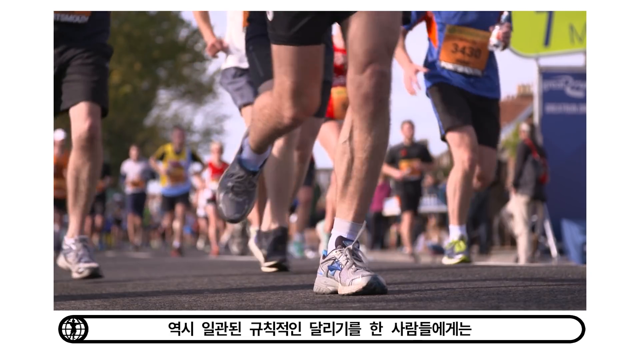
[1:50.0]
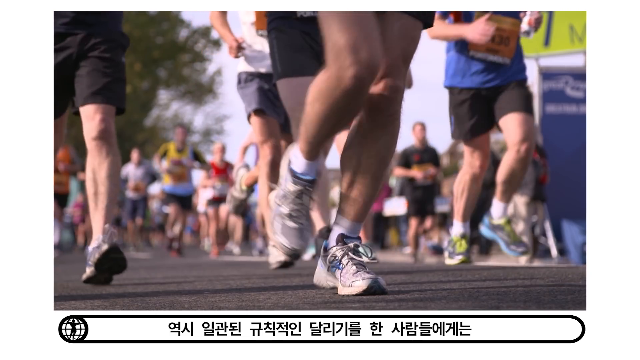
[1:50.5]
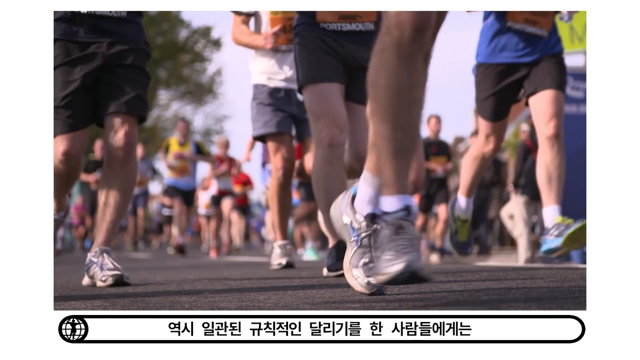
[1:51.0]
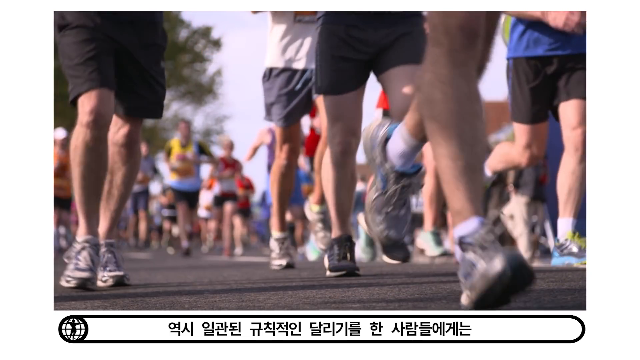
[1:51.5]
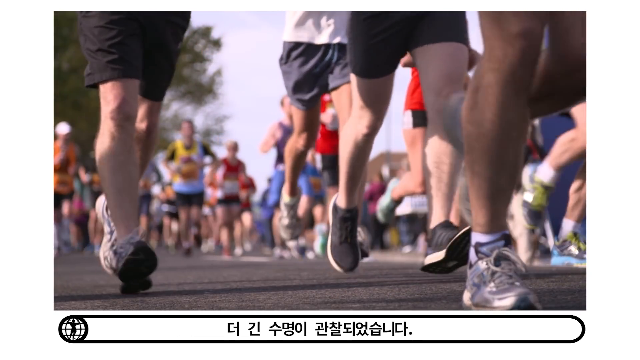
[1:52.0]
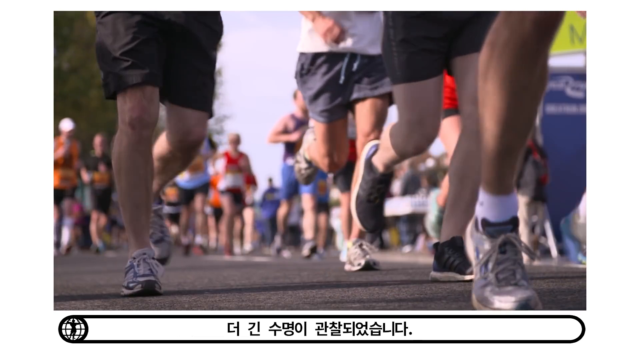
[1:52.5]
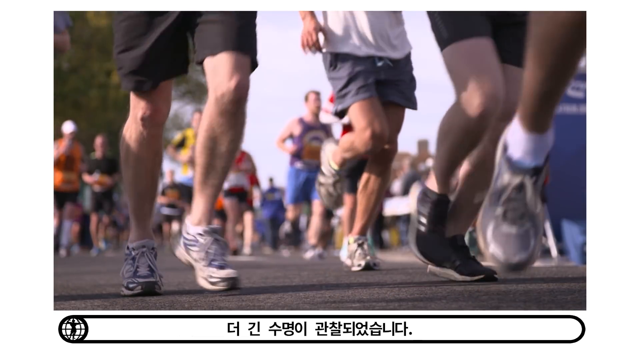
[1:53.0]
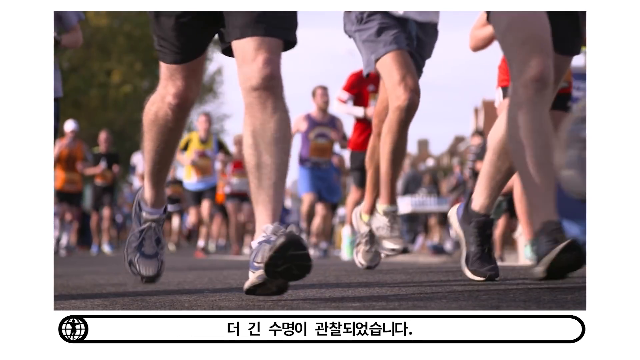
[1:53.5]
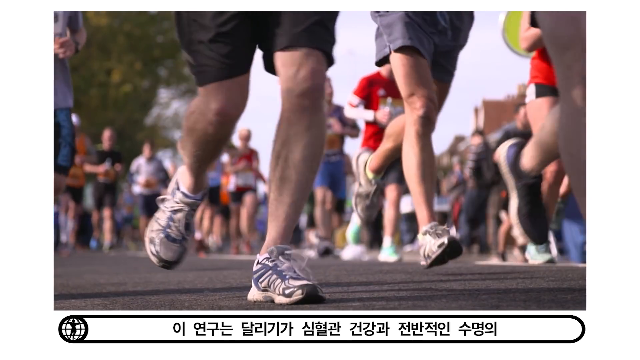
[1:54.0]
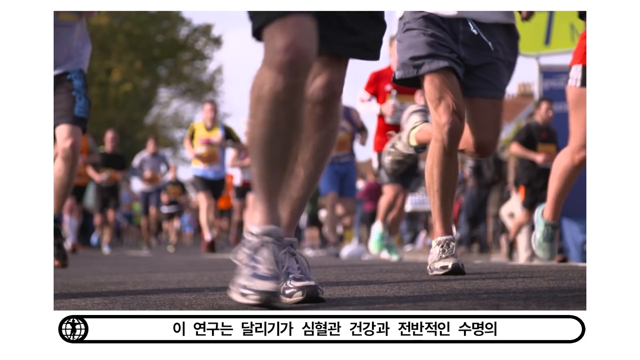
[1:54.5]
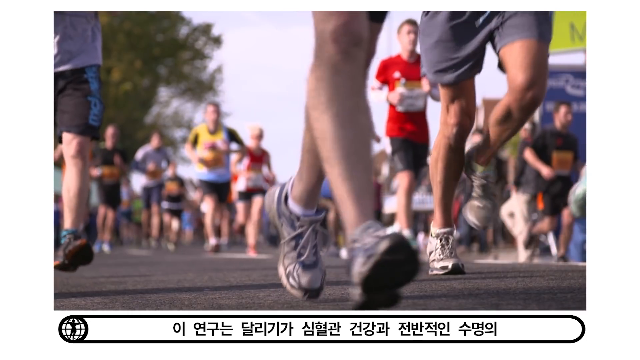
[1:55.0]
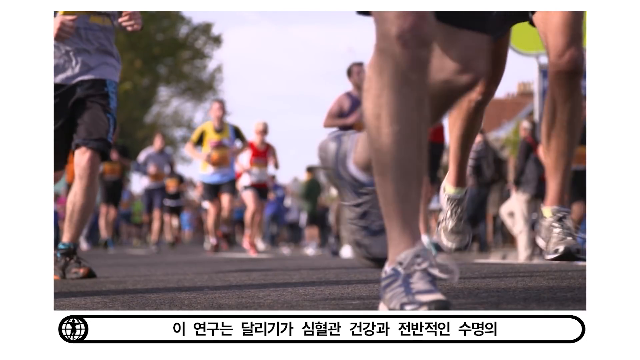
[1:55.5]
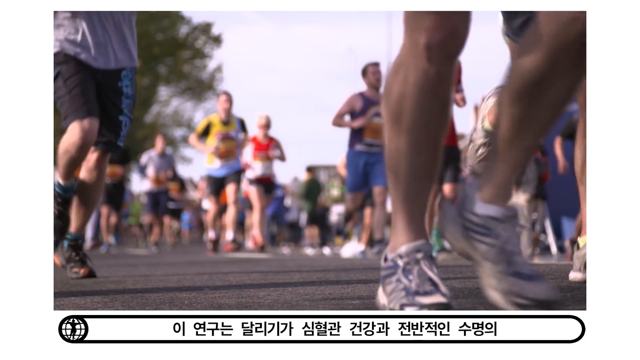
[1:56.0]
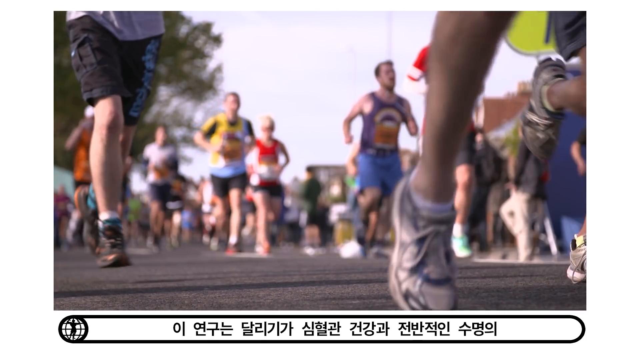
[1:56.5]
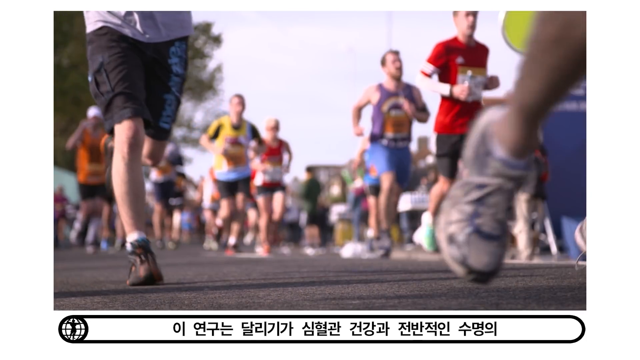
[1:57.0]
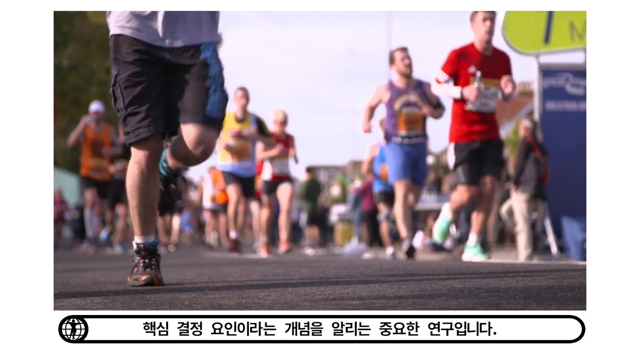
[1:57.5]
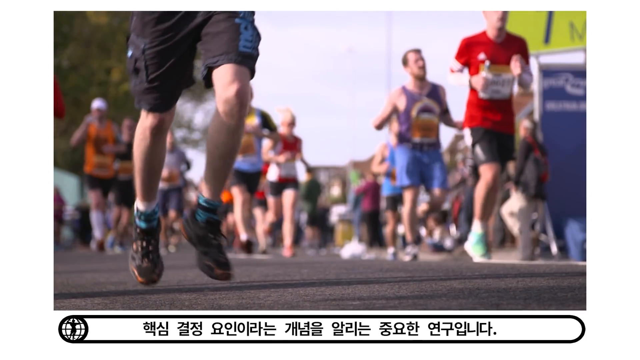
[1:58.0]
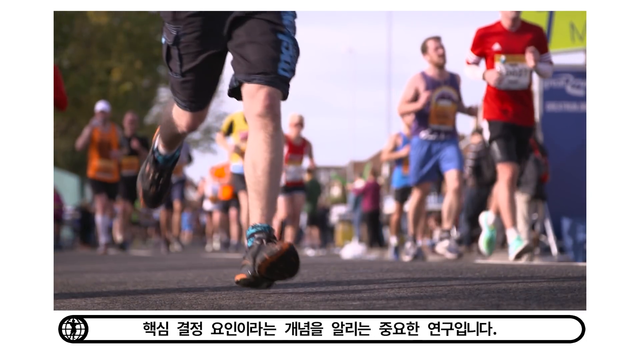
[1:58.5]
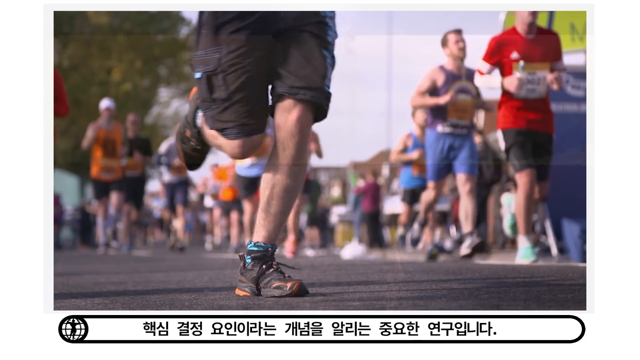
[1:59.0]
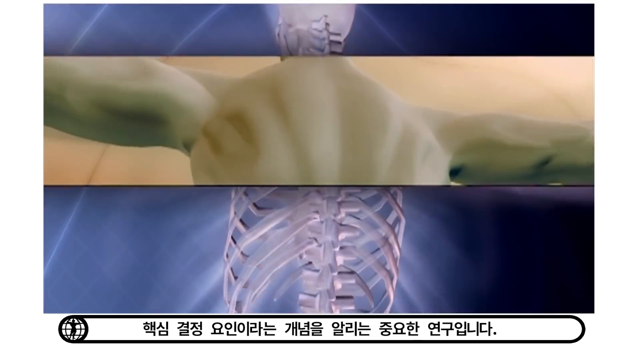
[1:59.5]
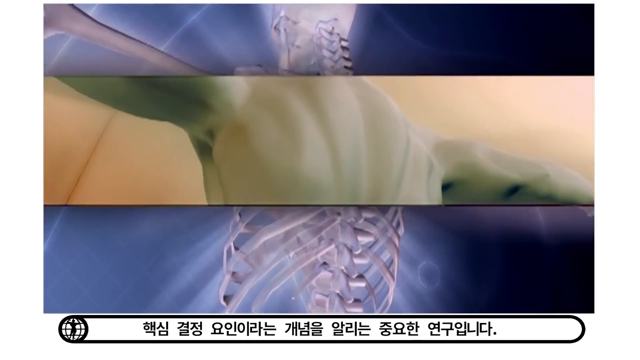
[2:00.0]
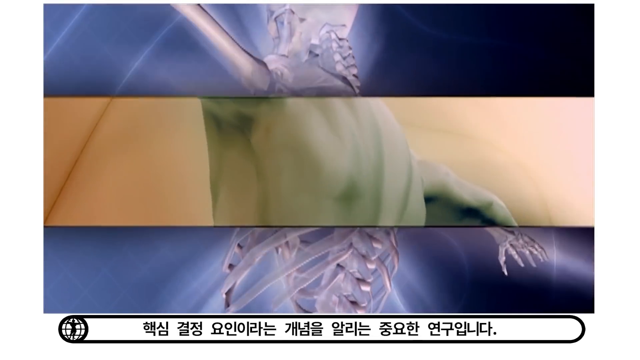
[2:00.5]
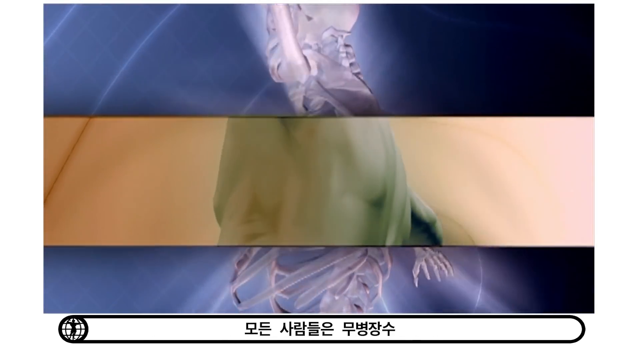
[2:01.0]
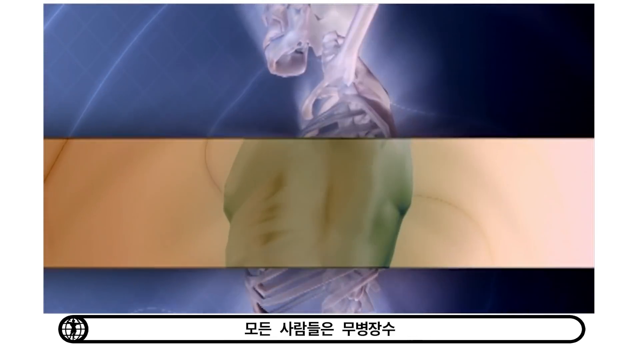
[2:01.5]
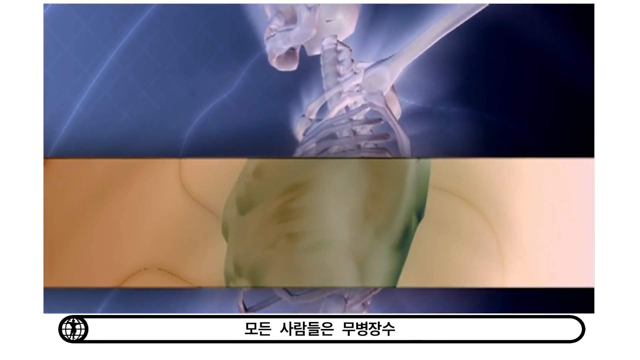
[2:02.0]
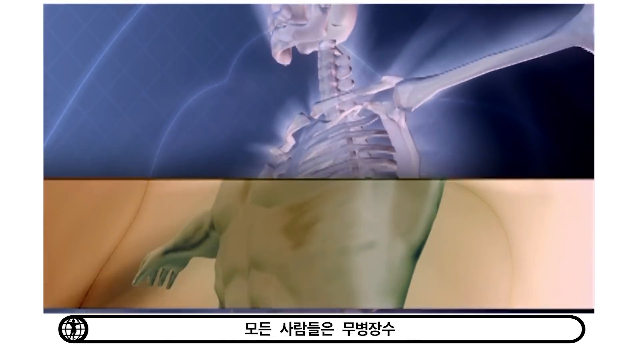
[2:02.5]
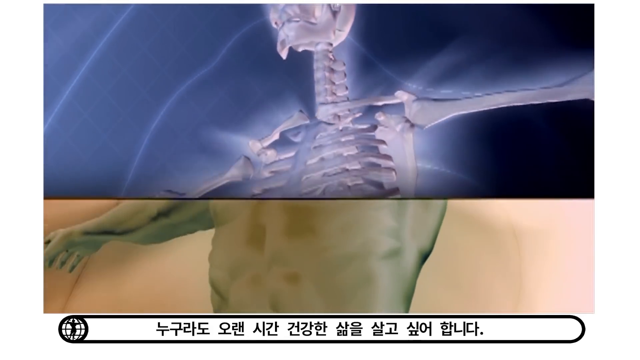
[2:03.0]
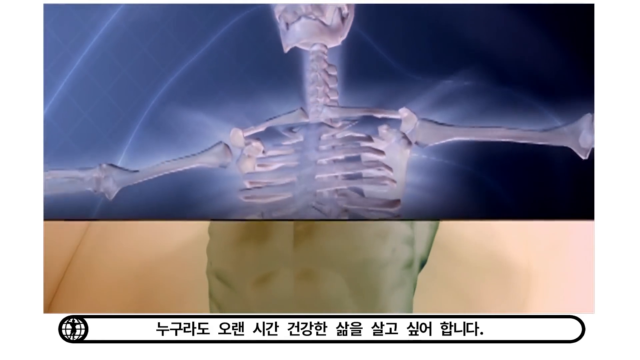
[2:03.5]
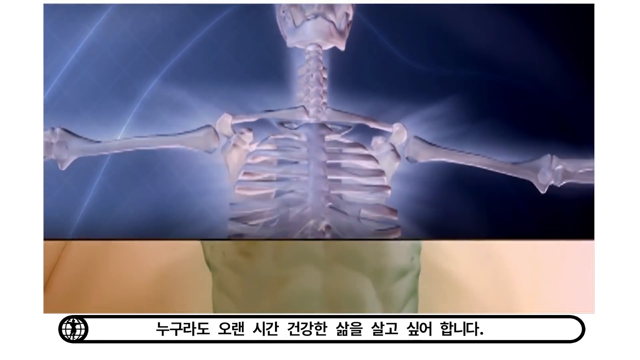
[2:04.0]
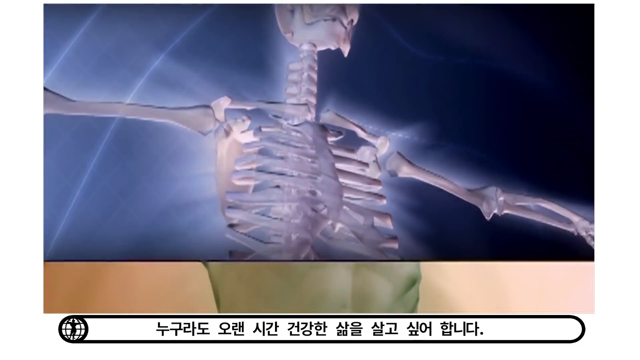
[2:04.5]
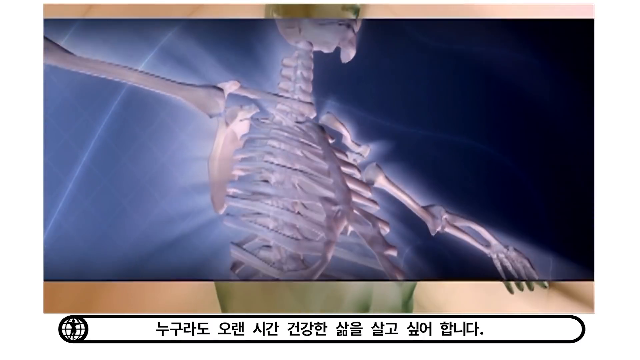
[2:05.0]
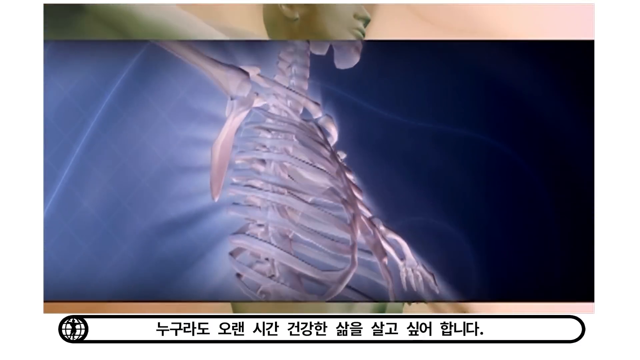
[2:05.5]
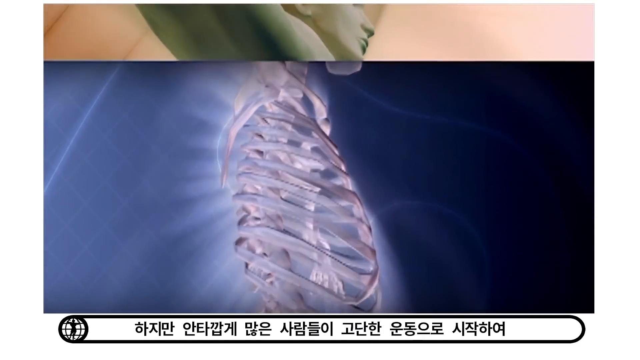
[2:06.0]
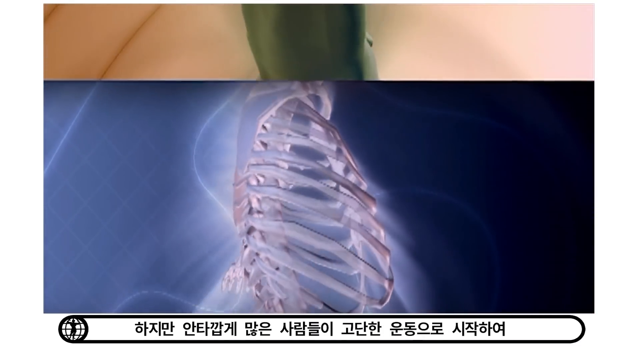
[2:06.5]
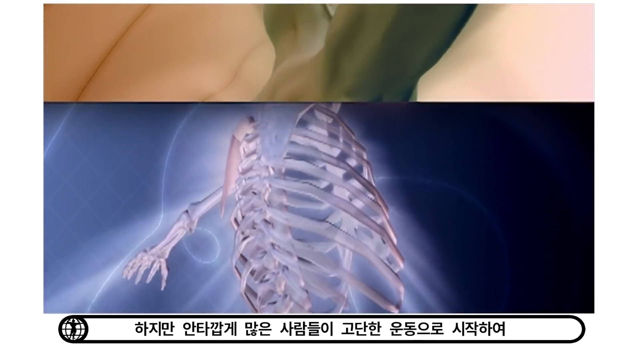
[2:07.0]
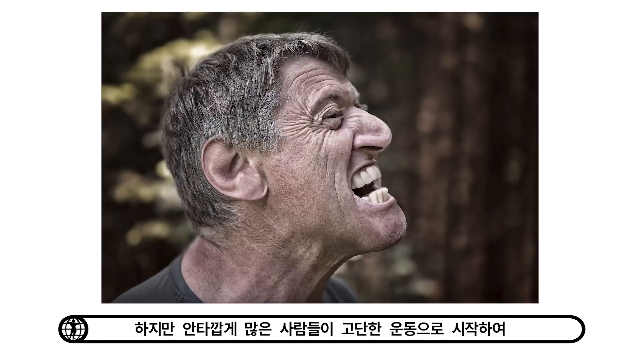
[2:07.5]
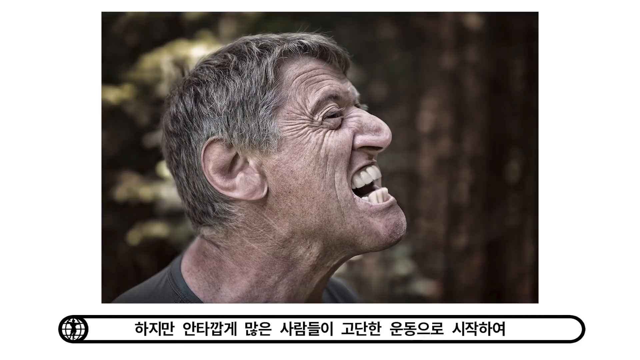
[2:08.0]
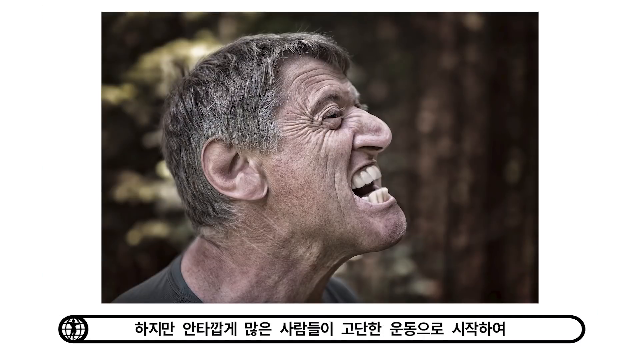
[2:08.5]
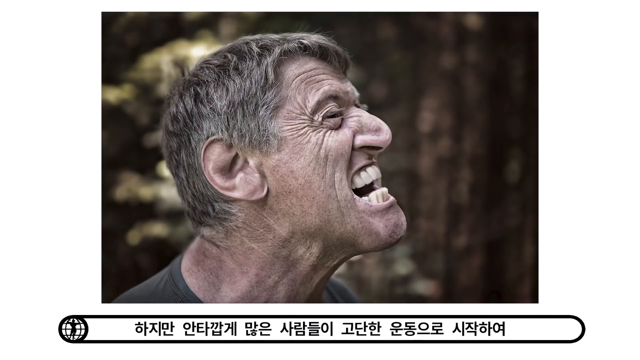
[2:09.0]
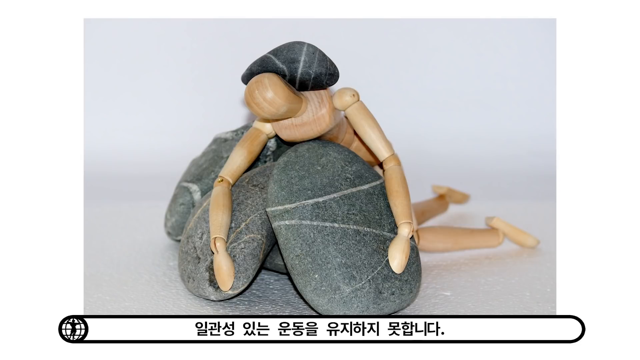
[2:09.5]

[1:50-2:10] A banner in an Asian language is at the bottom of the frame. People jog in what looks like a marathon. A diagram of a skeleton then turns into a silhouette of a body. A man grimaces, probably after exercising. An old man appears in a river scene. Then a stick figure made of wood is on a bunch of stone blocks, looking tired after the exercise.